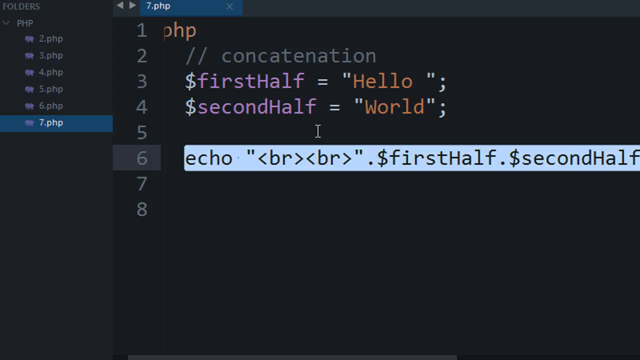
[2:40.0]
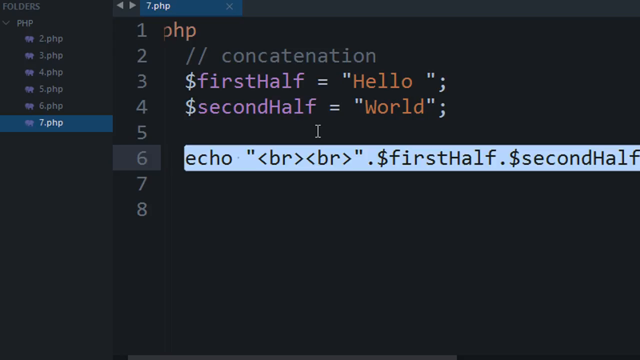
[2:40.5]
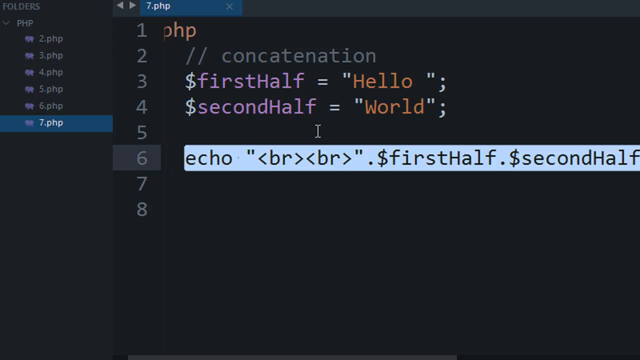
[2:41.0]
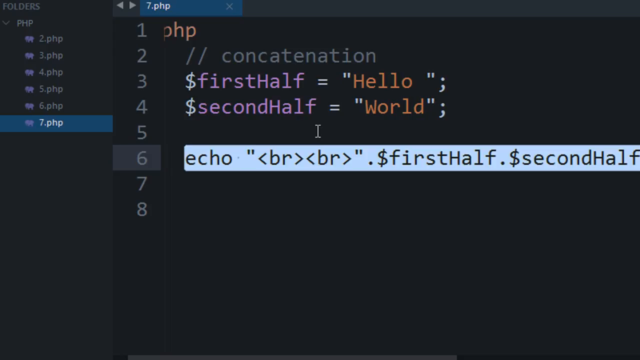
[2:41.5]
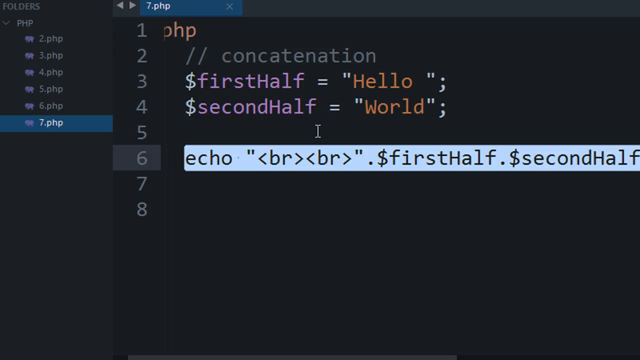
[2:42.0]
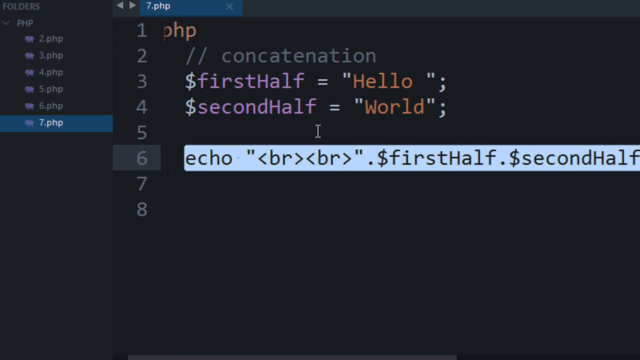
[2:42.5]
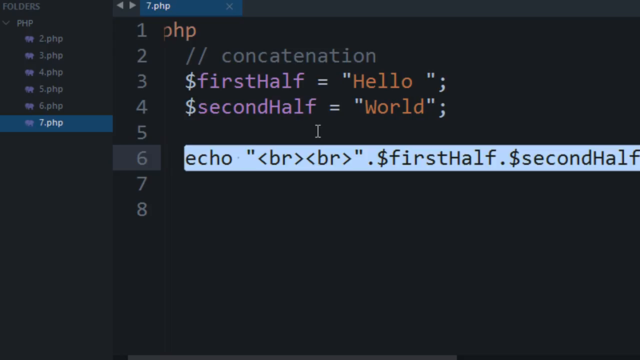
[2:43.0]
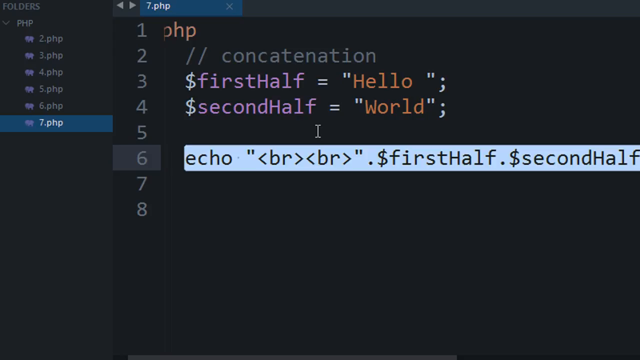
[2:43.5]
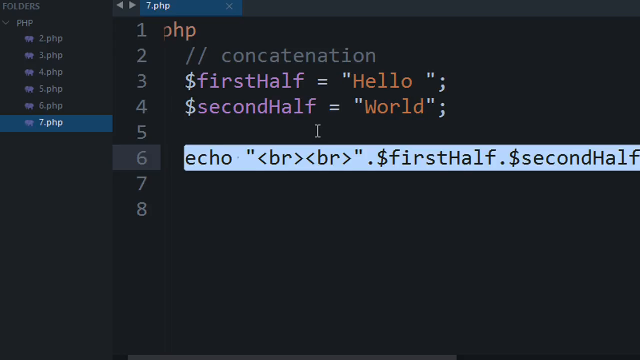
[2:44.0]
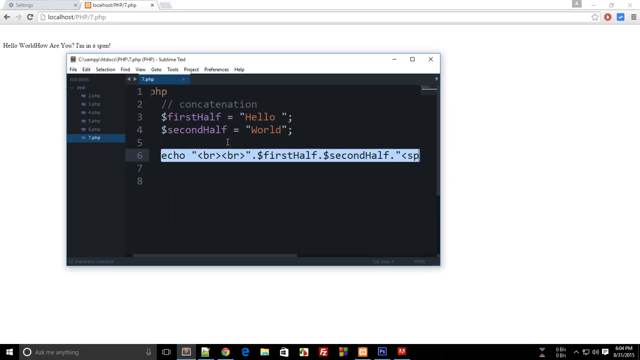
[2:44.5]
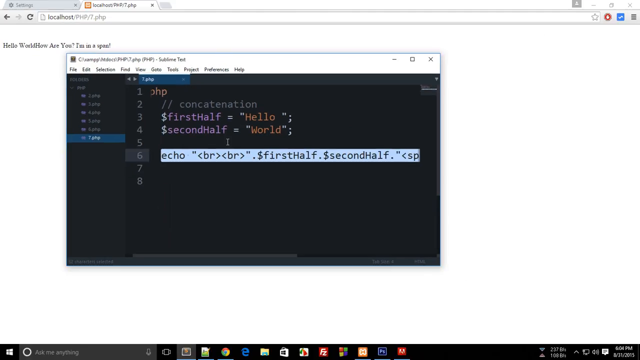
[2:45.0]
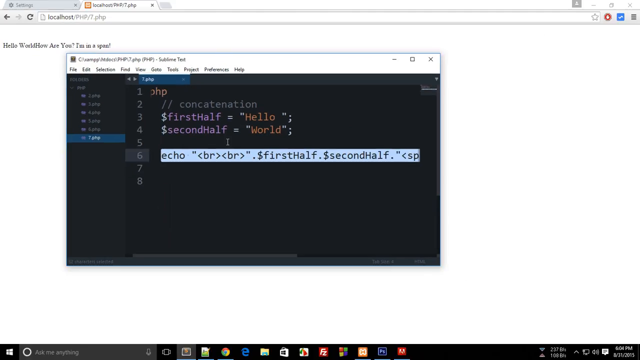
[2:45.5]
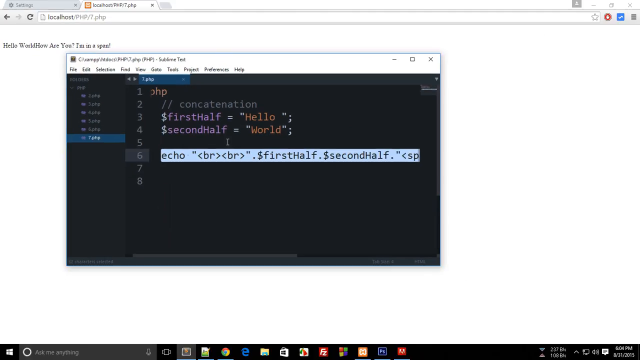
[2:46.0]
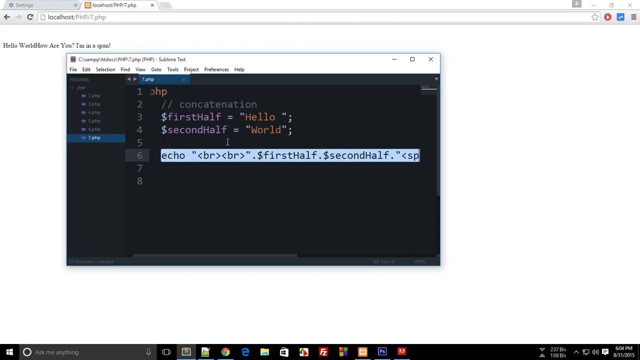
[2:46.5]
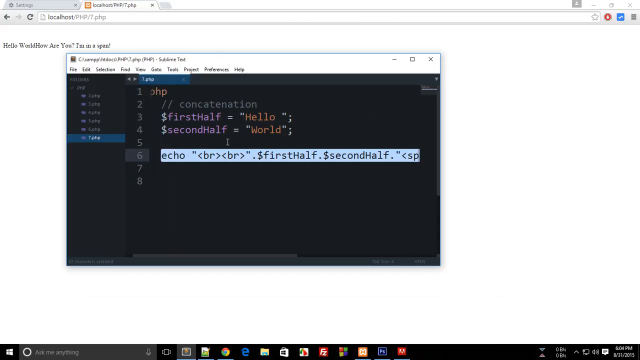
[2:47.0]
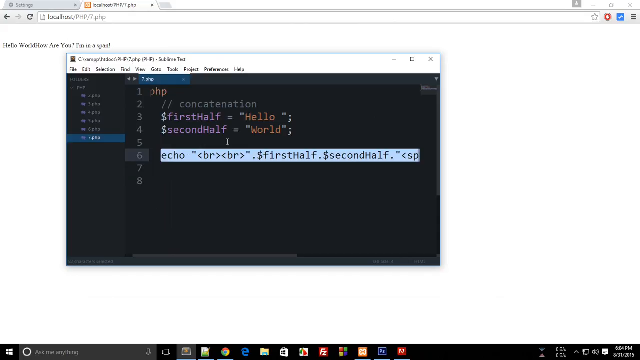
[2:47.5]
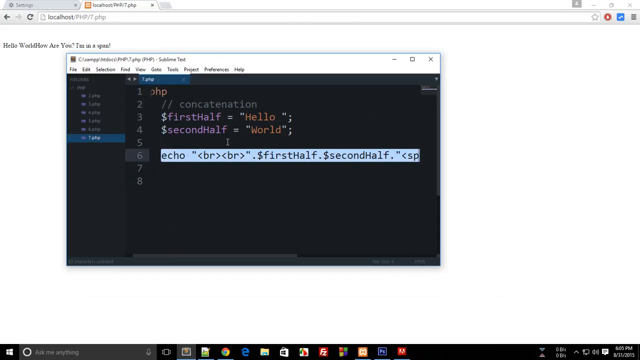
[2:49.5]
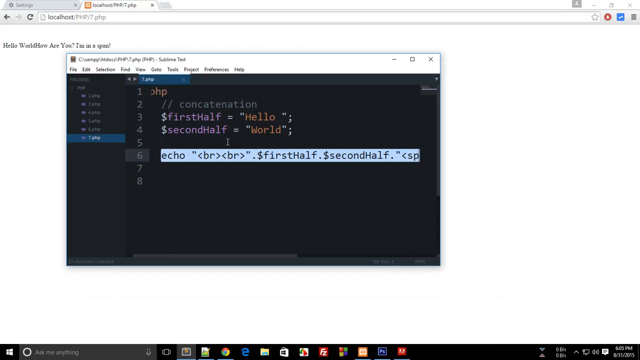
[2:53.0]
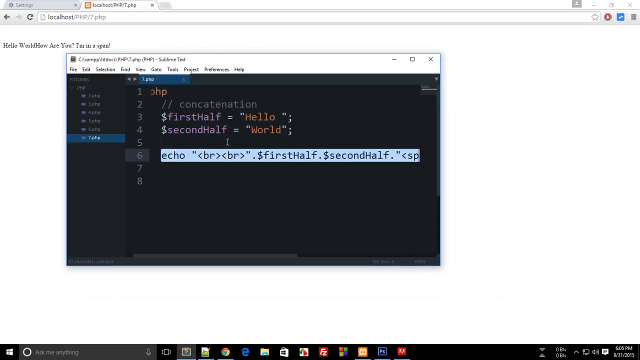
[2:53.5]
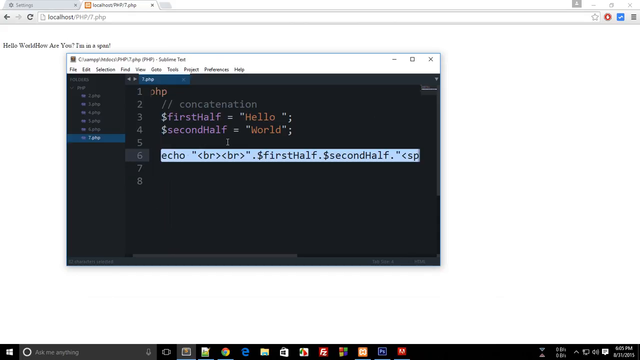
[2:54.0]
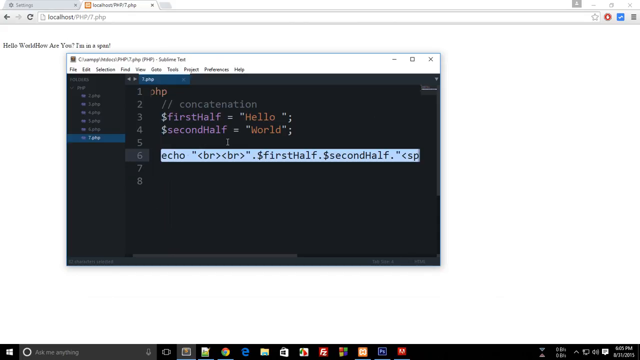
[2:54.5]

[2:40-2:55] The concatenated echo statement is still highlighted, apparently still on the topic of concatenation. It combines the BR, the first half string, the second half string, and the span into one single statement to be output in the browser.